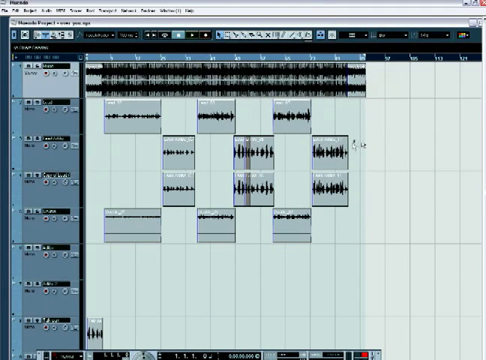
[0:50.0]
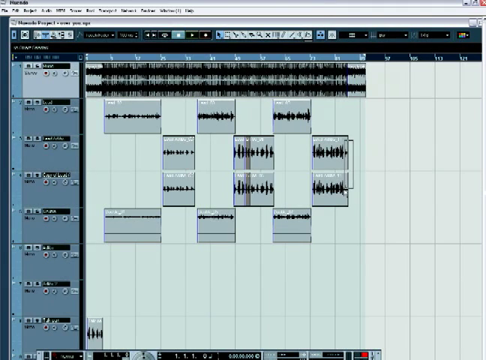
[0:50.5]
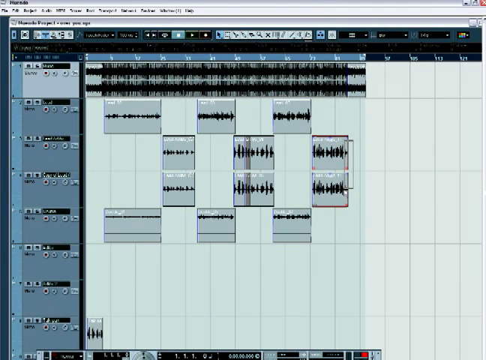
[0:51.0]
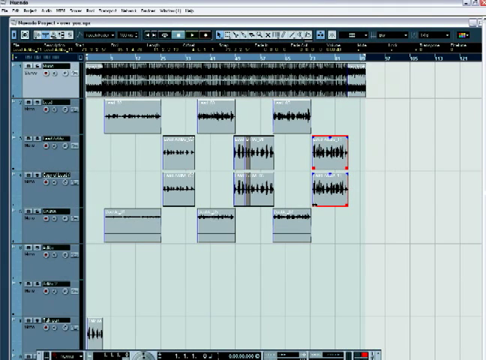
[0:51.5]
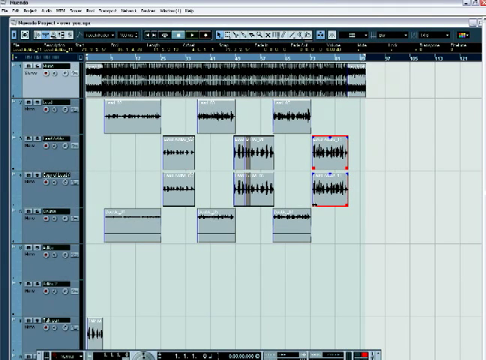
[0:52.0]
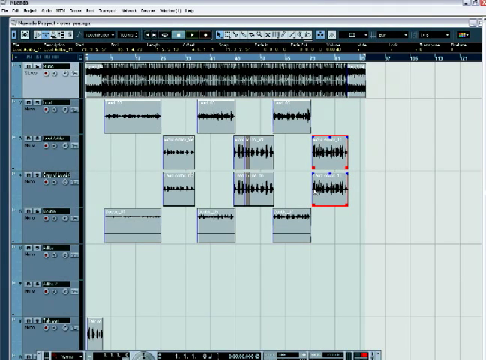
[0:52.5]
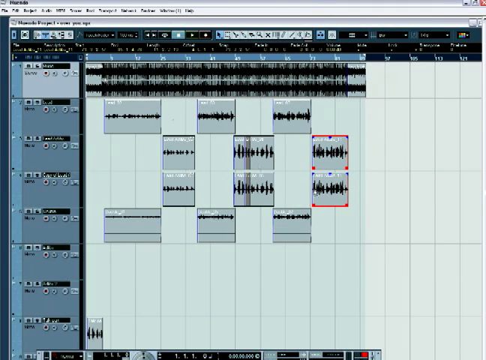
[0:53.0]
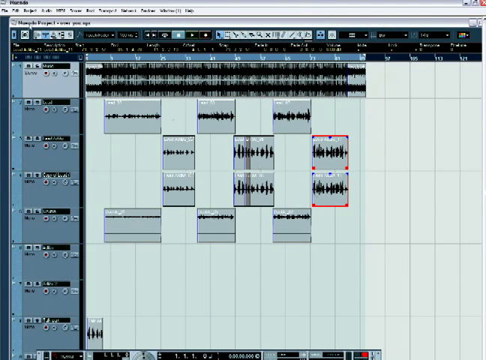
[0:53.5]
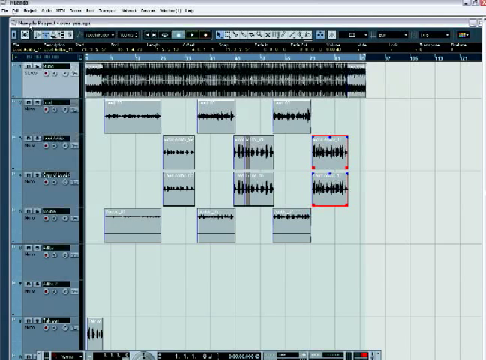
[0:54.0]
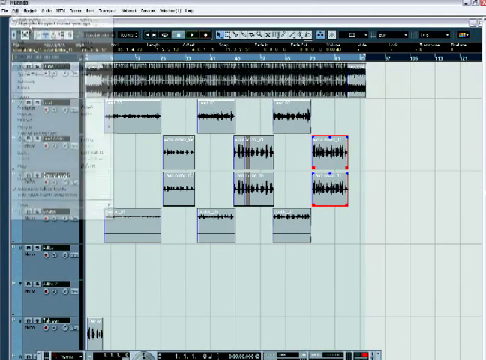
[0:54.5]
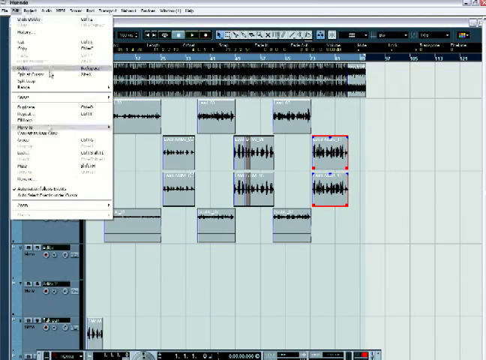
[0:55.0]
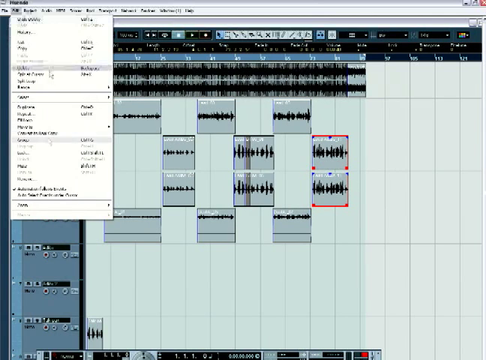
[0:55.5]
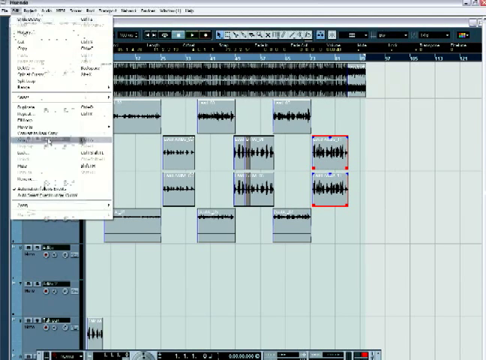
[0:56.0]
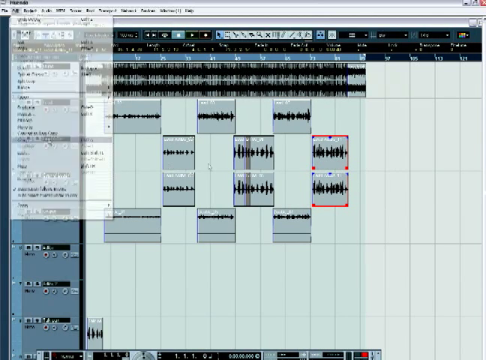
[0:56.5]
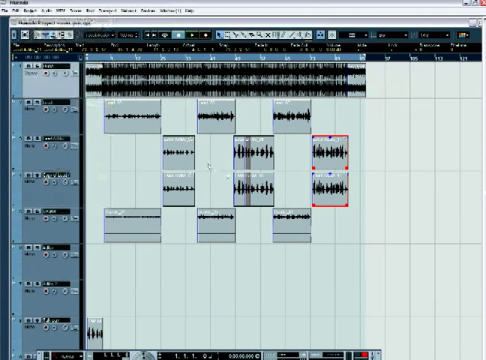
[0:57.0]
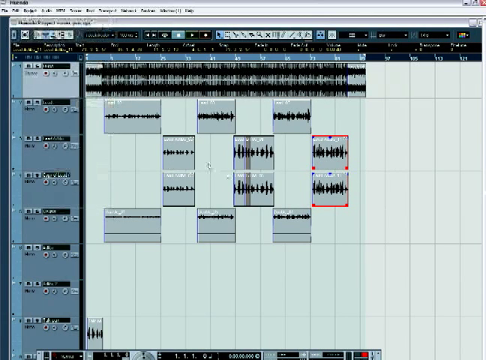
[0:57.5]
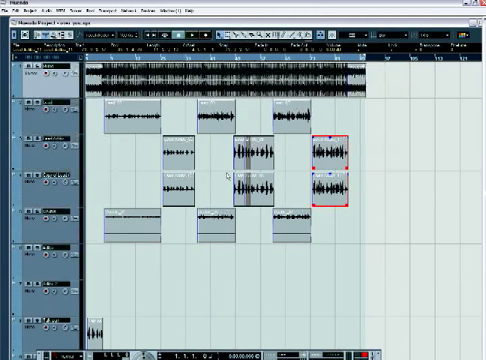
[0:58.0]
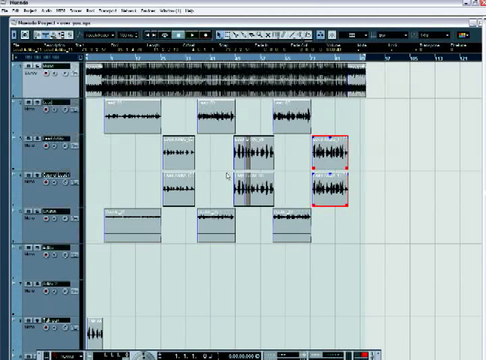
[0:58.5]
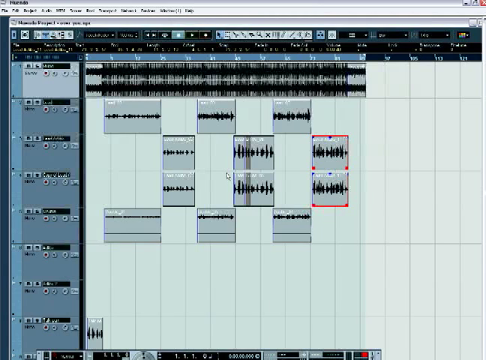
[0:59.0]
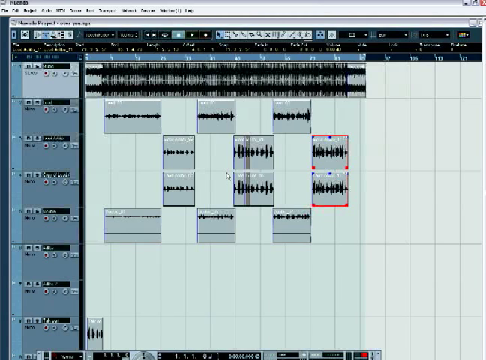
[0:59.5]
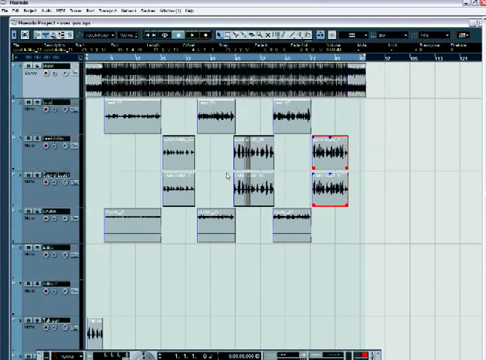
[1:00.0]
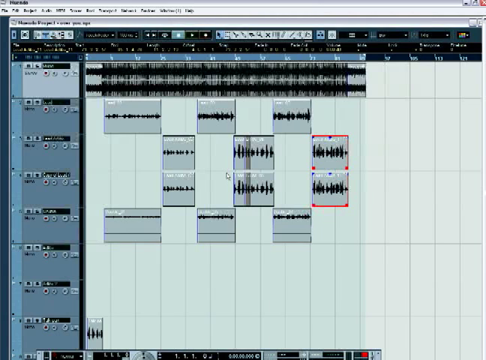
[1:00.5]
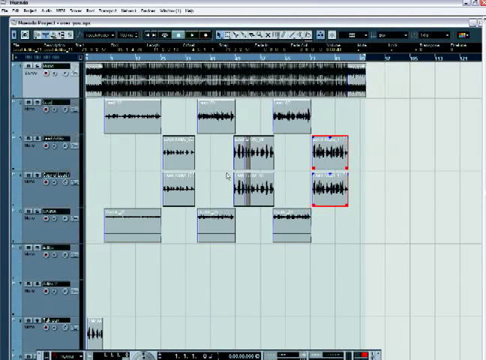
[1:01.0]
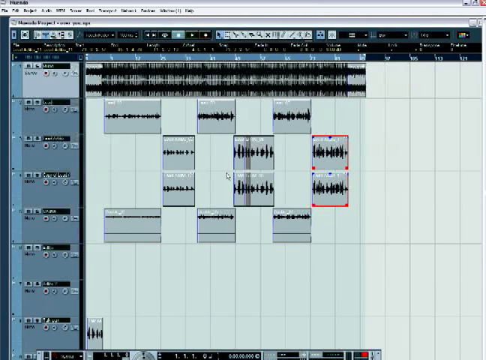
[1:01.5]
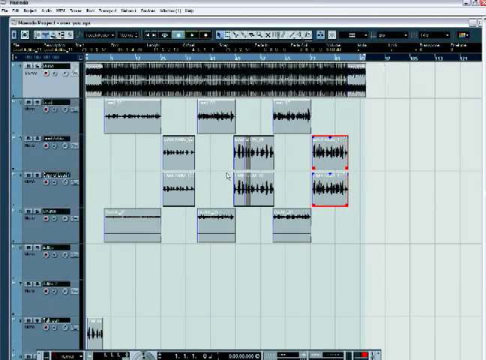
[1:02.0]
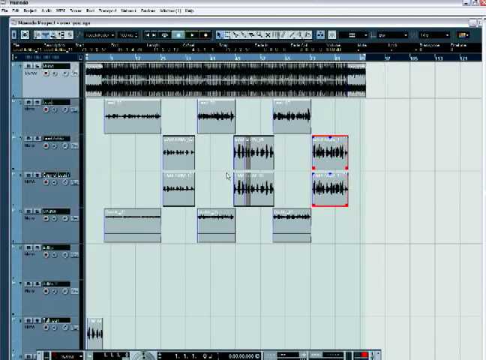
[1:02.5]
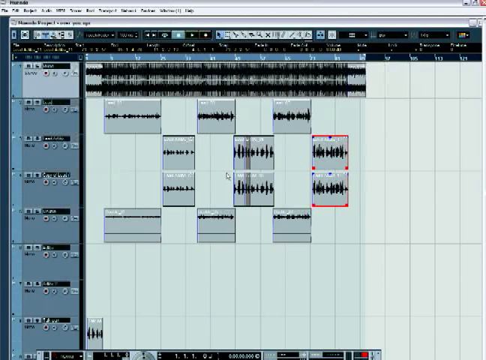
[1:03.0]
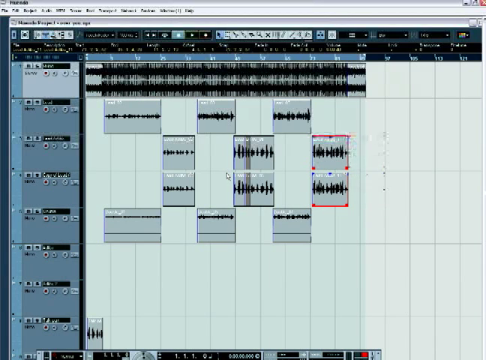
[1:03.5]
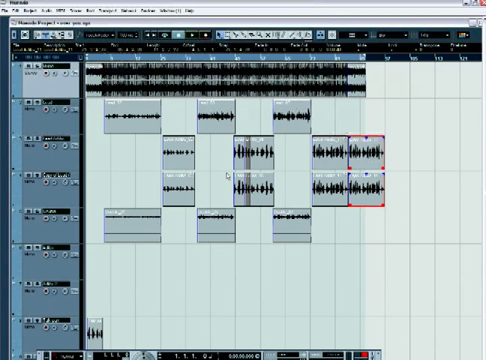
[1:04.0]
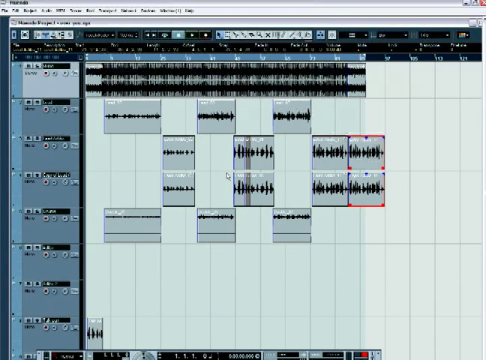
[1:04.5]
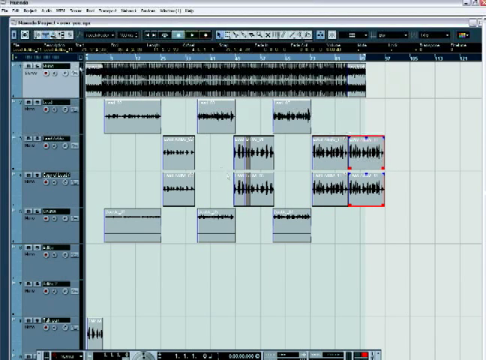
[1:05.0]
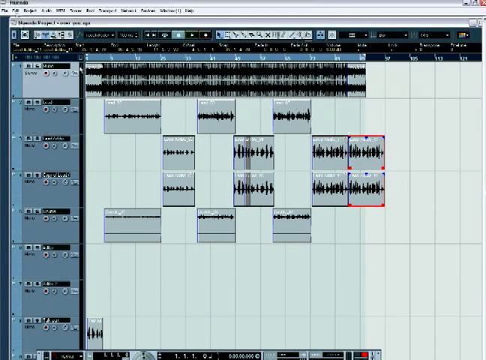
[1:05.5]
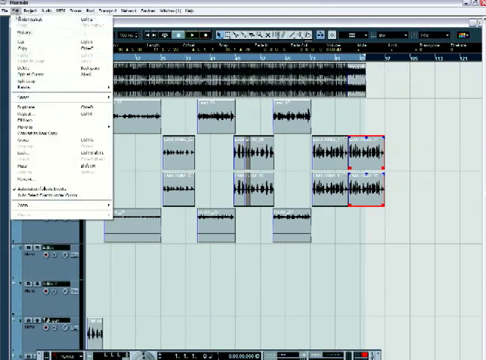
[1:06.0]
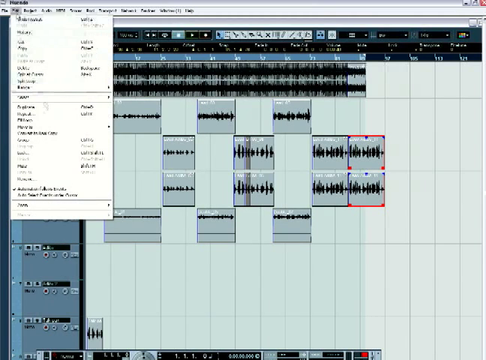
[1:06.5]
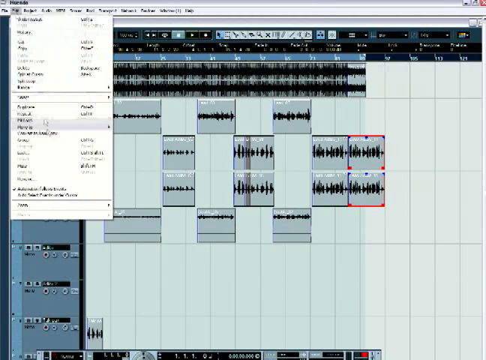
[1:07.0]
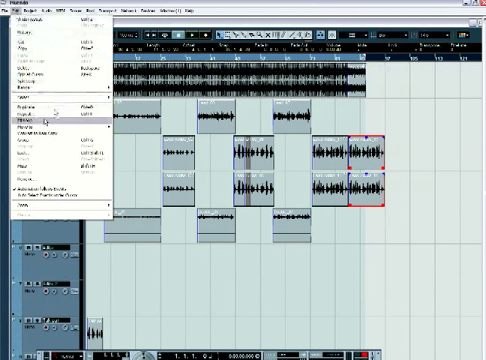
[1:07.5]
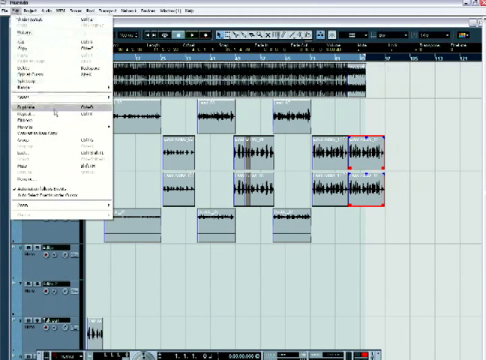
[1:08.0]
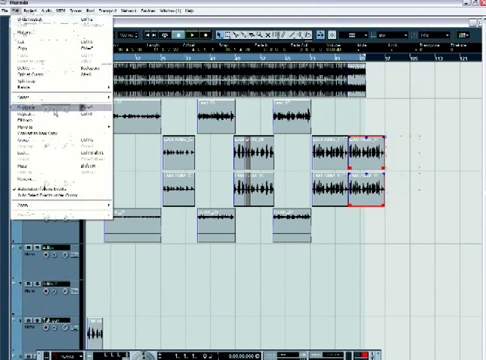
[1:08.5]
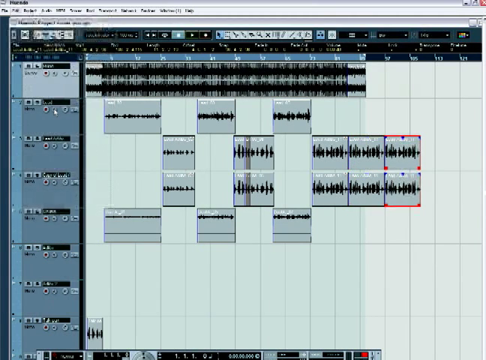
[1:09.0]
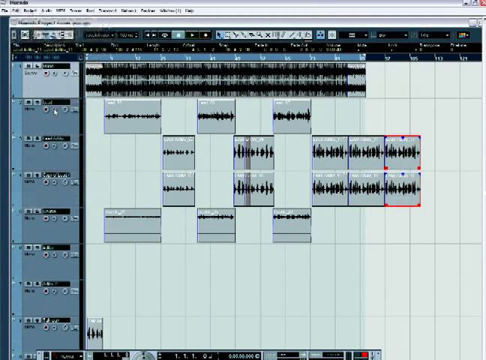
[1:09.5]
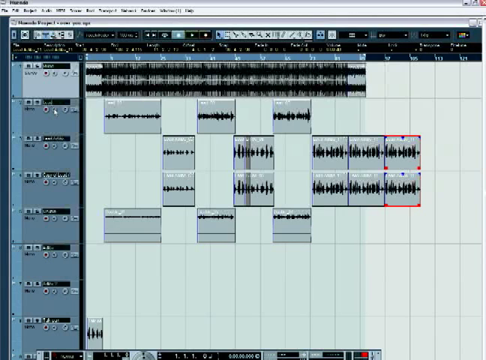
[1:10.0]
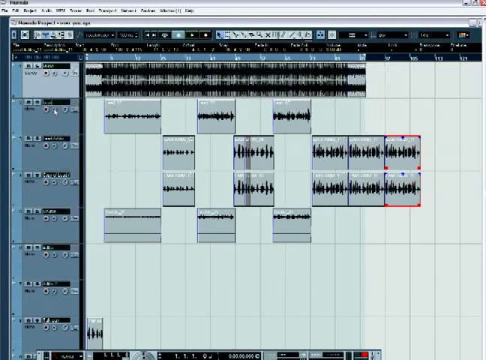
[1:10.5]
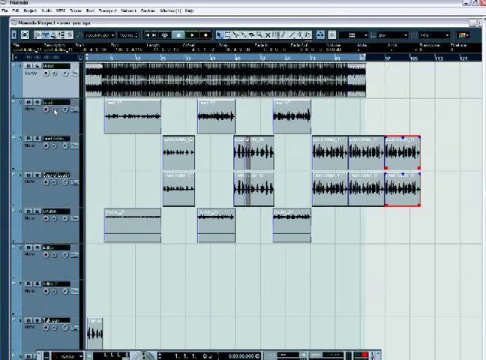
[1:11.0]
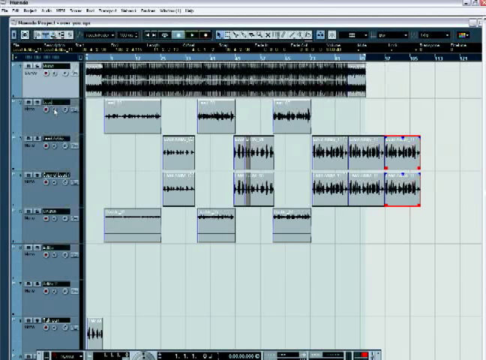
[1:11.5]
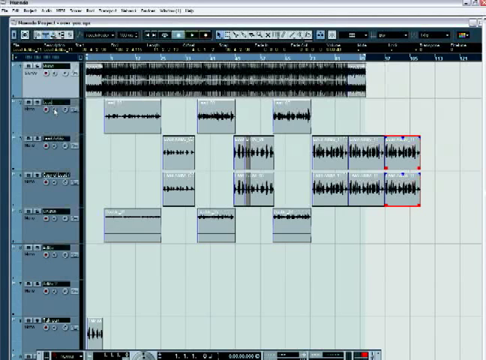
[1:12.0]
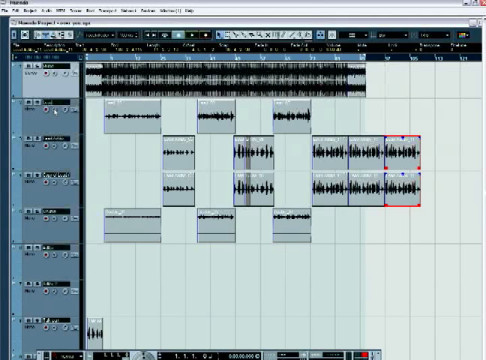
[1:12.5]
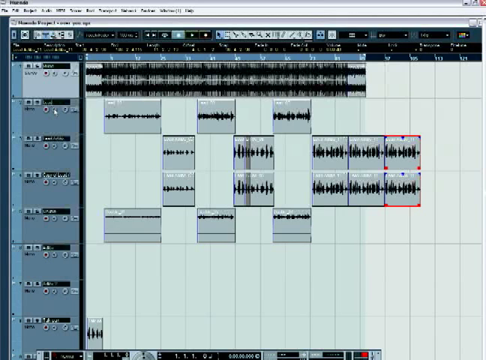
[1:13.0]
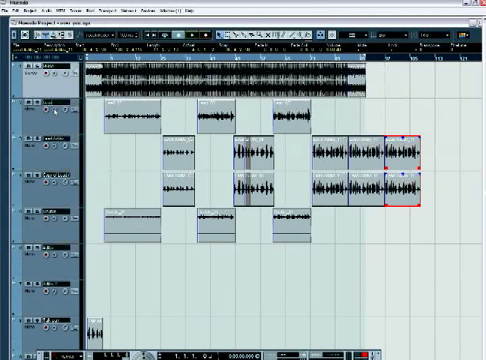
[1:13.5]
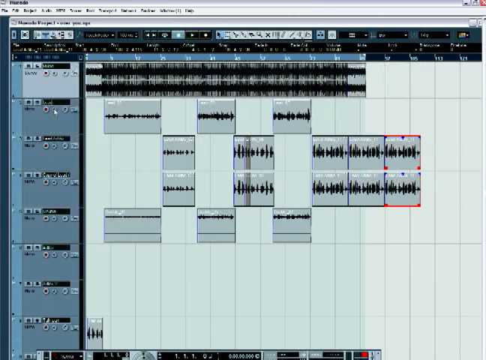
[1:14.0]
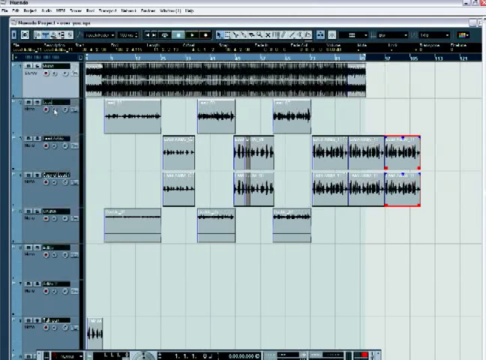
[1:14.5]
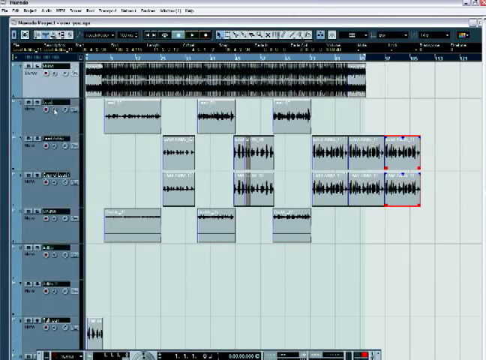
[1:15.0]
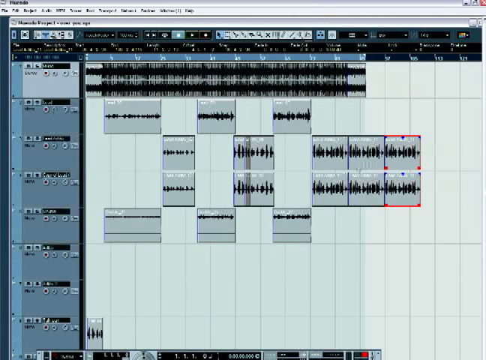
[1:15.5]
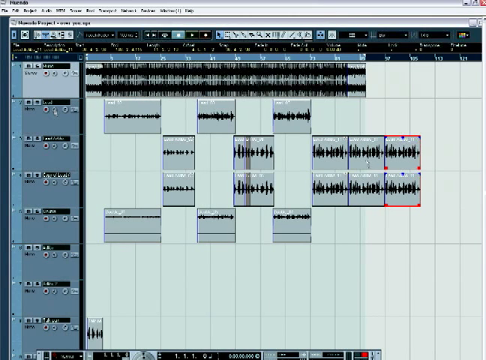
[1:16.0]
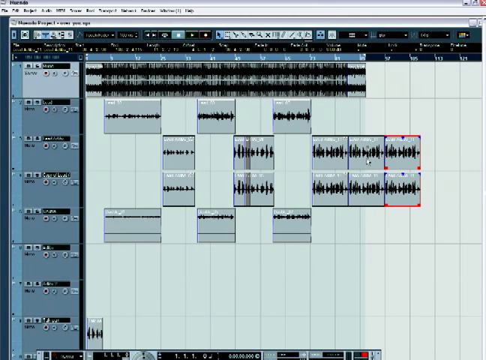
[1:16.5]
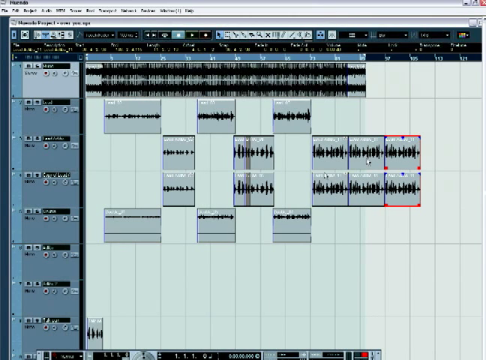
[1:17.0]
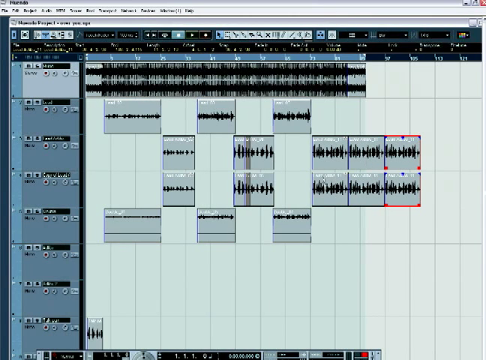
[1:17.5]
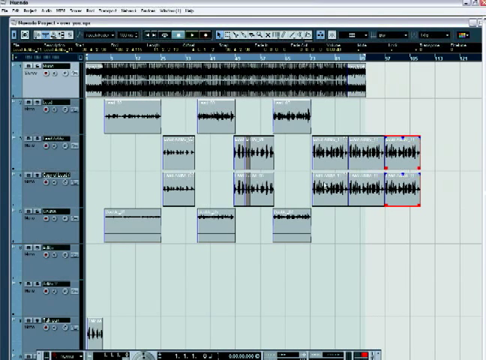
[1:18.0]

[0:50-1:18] A recording of a computer screen shows some kind of music or software editing program with multiple tracks open; two of the tracks have nothing on them, while every other track has some kind of sound wave file. Using the teleporting mouse cursor, the user drags to highlight two sound files in the third and fourth sound mixer rows. They then open very blurry, out-of-focus menus and click on some kind of option. The cursor slowly teleports back and forth, left and right, and goes downward toward a music track. They then open File and click on something very blurry. This causes some kind of replication: two of the visible sound files get duplicated twice and are placed in the same exact channel as the files that were copied.